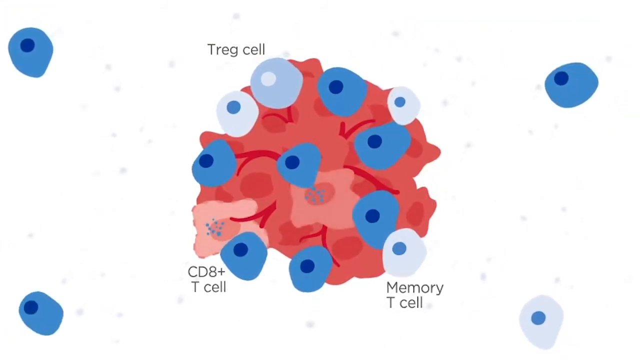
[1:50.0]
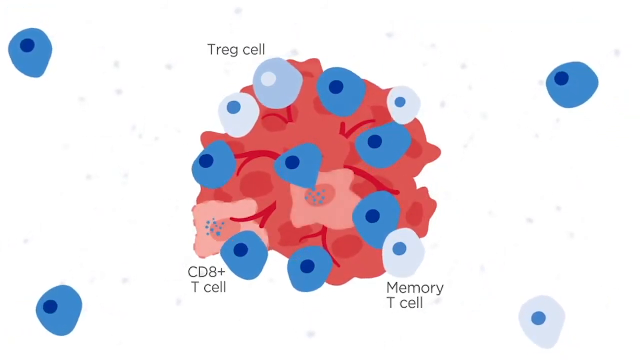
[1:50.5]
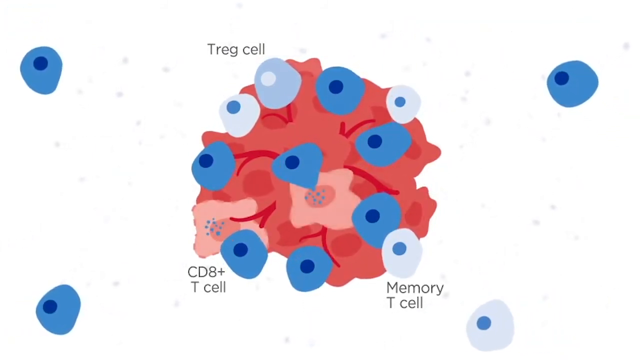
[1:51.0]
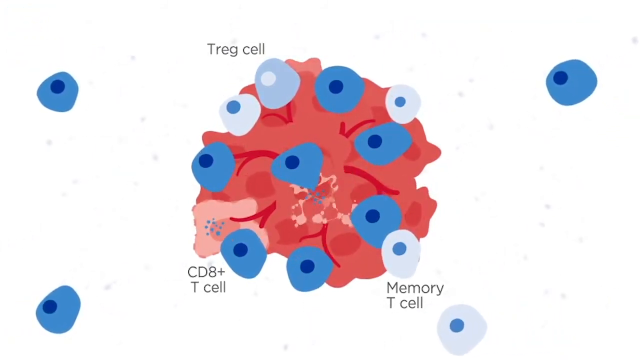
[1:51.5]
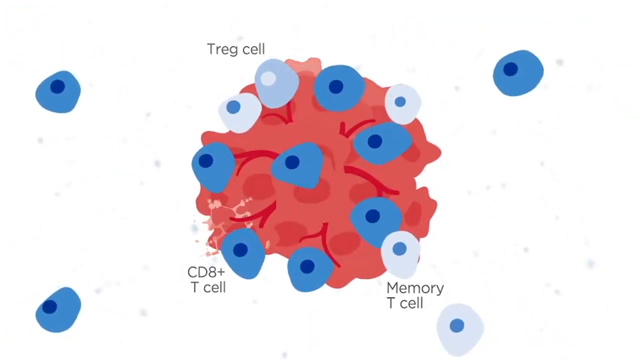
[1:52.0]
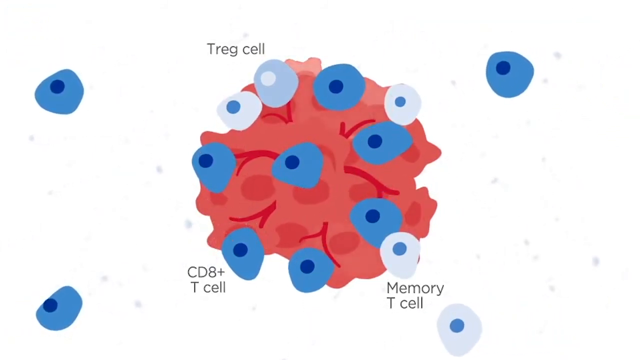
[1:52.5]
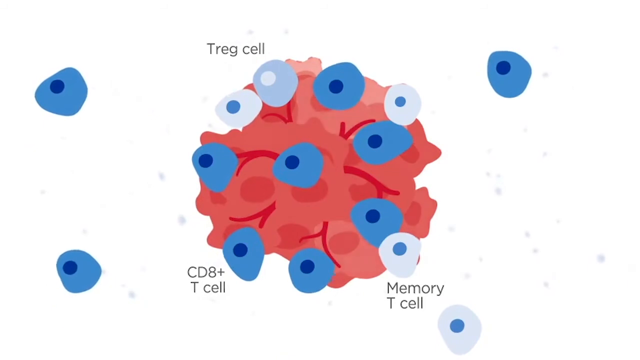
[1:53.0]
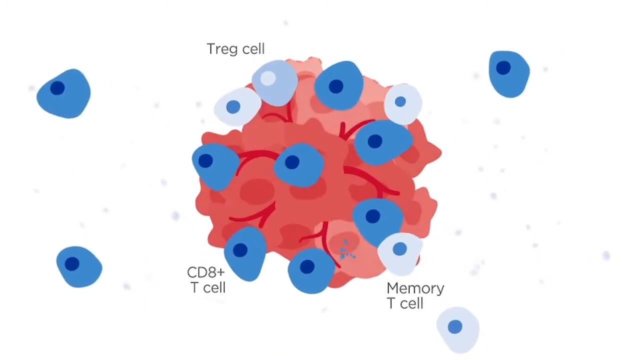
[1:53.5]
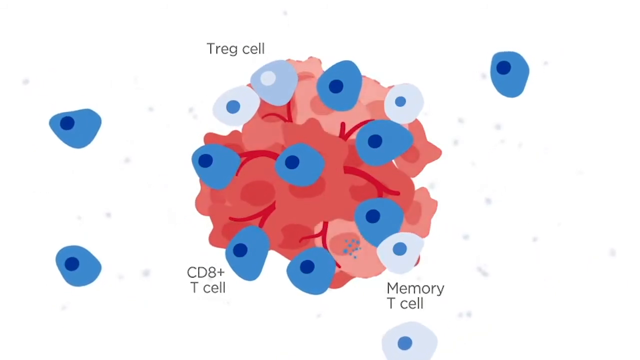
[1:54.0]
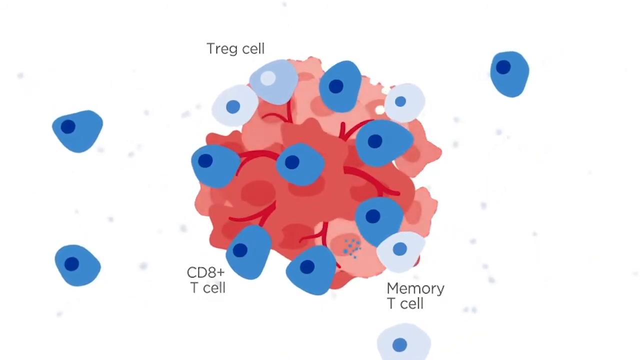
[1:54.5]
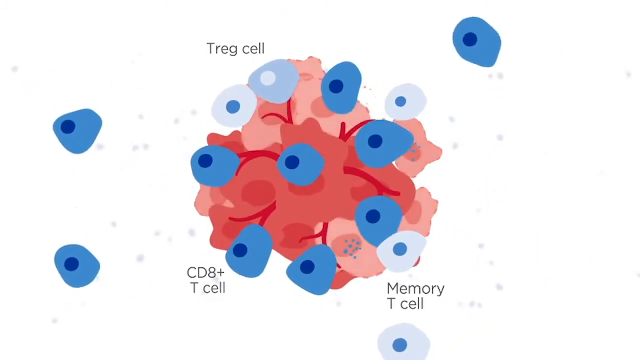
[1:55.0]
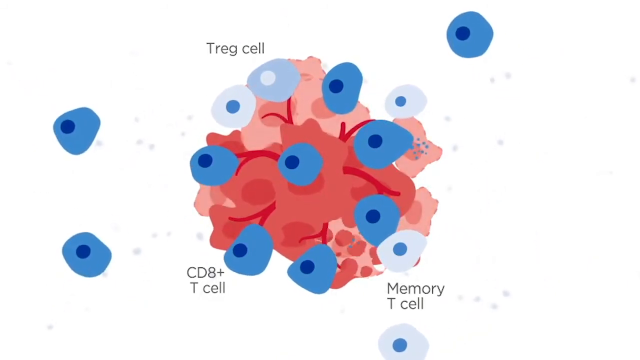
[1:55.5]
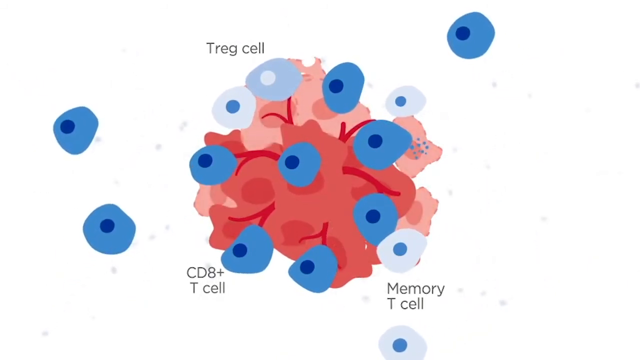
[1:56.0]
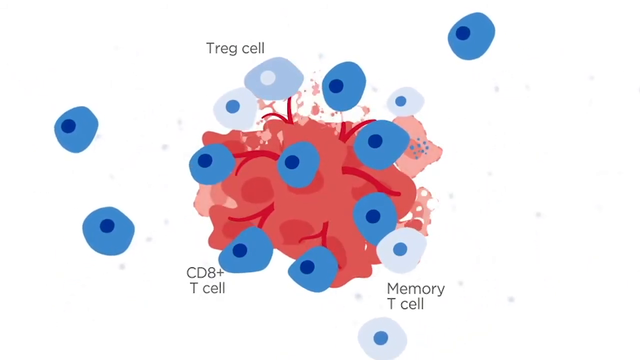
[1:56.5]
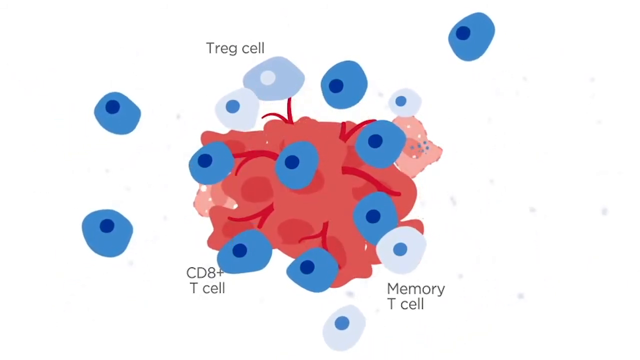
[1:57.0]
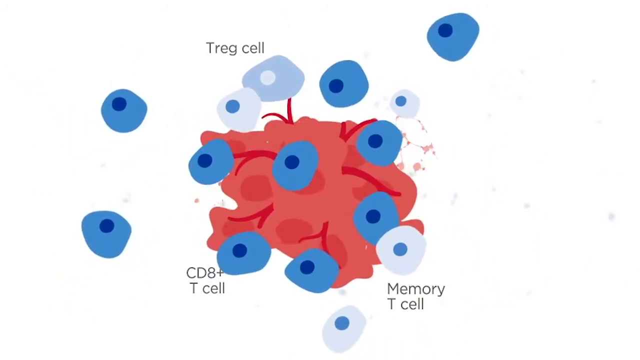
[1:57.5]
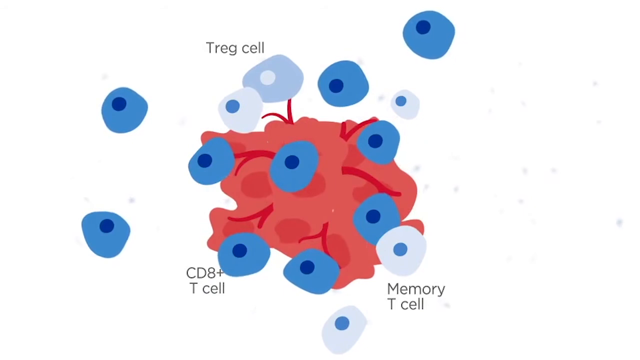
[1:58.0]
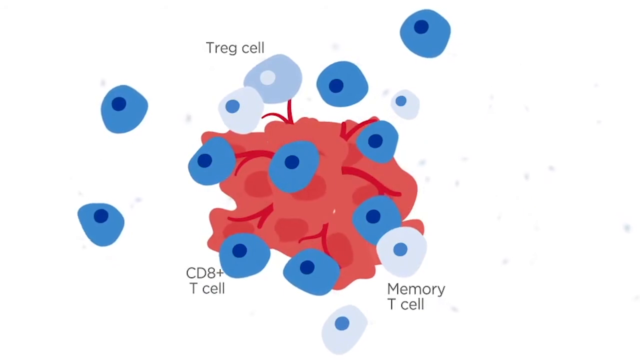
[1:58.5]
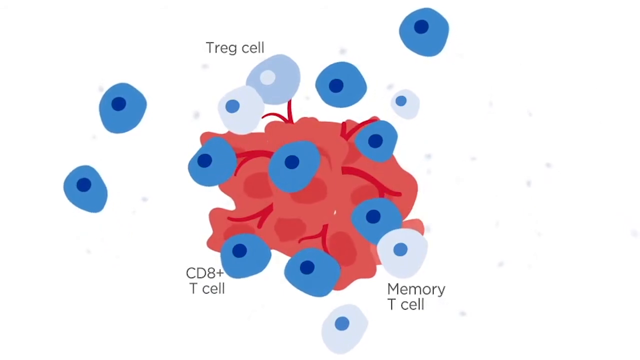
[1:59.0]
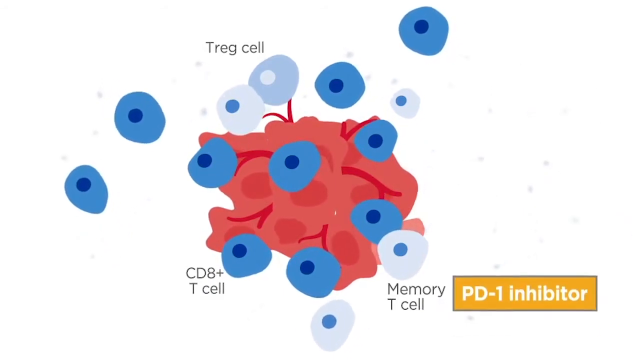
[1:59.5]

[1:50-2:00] A pink tumor contains a lot of dark red cells, identified as CD8 plus T cells; Treg cells and memory T cells are shown as well. Blue cells move around and tend to multiply within the tumor, circling very slowly, with two on the right side and one on the left, kind of swimming around. The tumor starts to disappear: the top of the red area breaks up, first turning pink and then disappearing. The bottom portion of the tumor remains, with quite a few blue T cells and memory cells in it. They kind of linger, while the darker blue cells, so to speak, attack by coming into the red area.